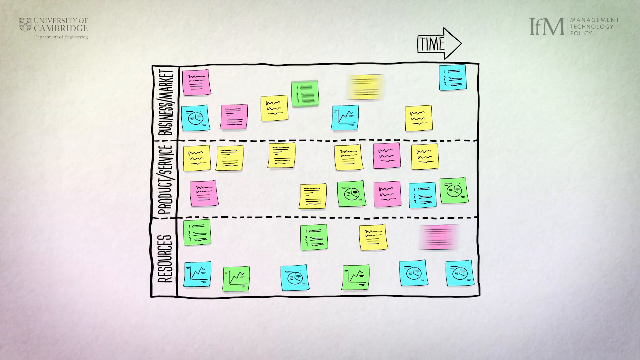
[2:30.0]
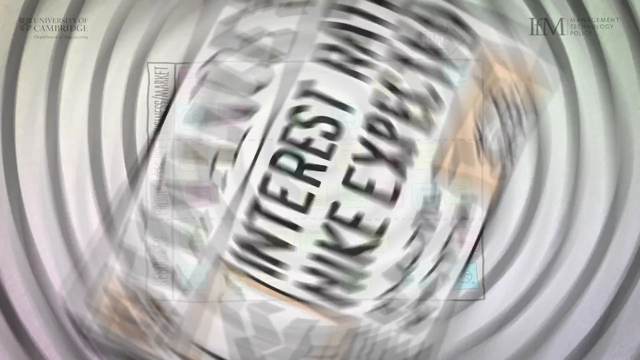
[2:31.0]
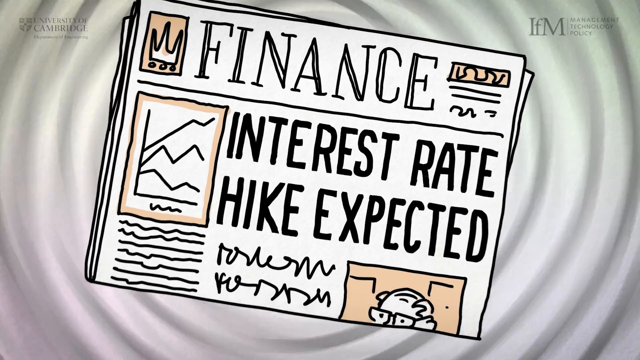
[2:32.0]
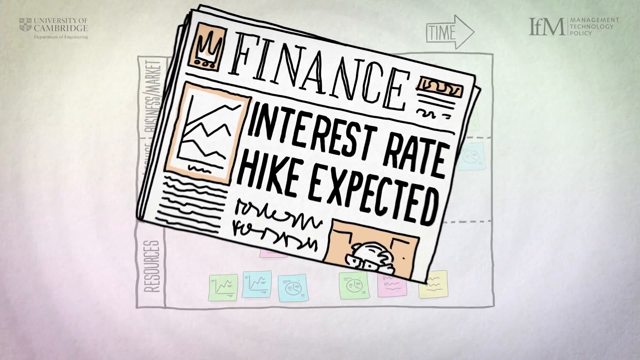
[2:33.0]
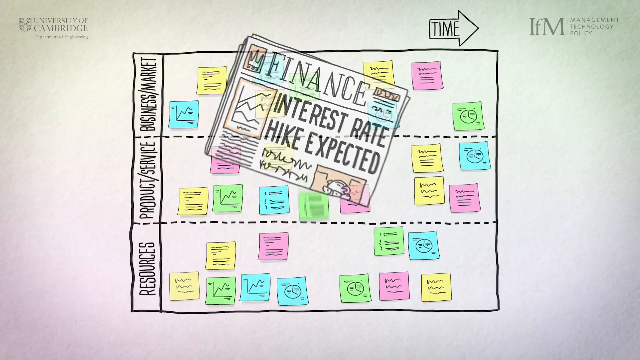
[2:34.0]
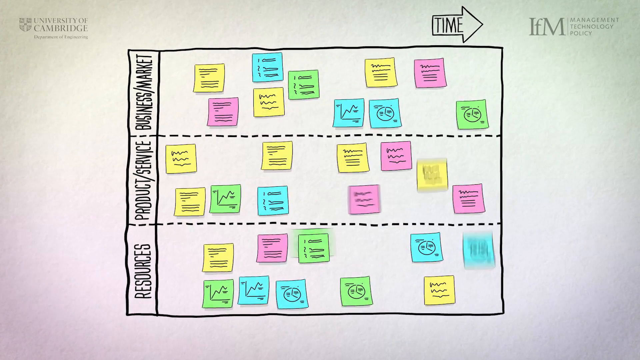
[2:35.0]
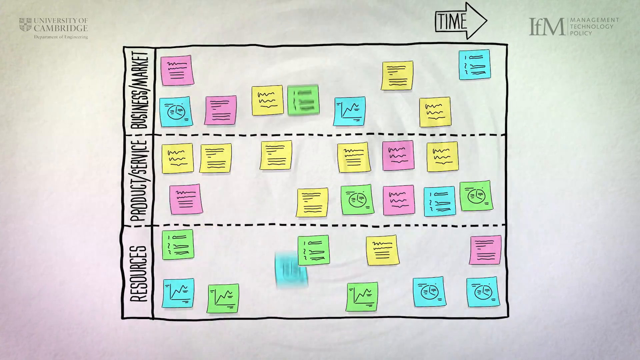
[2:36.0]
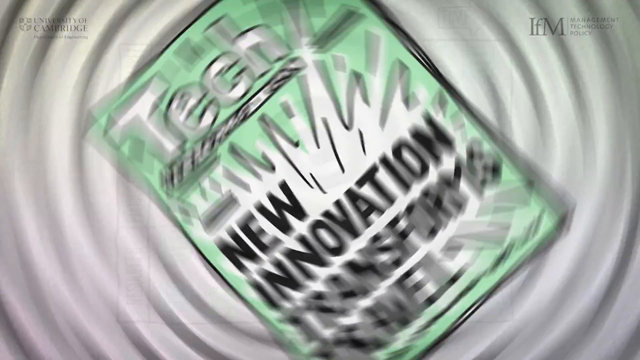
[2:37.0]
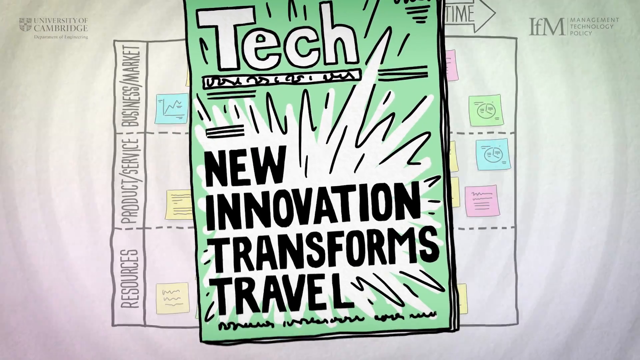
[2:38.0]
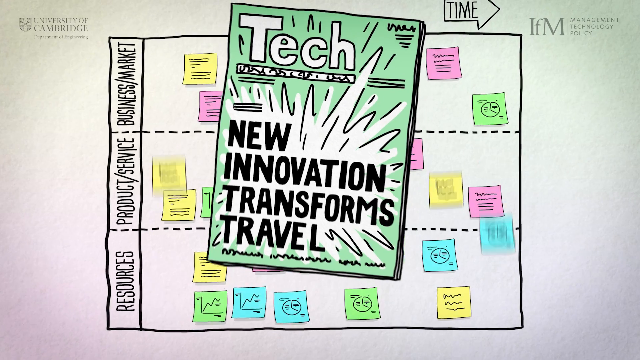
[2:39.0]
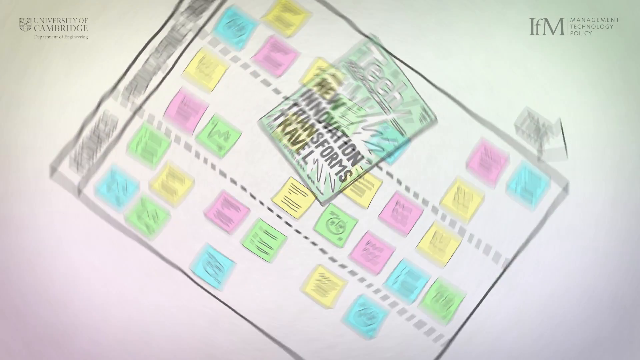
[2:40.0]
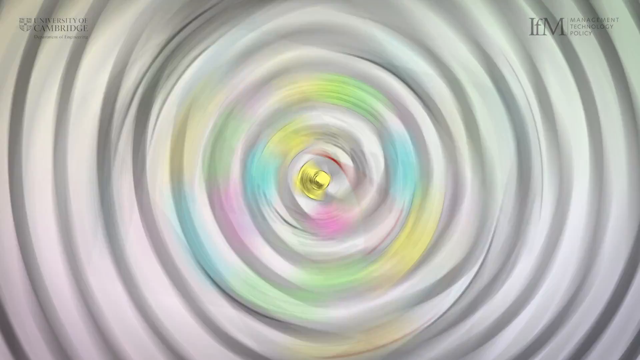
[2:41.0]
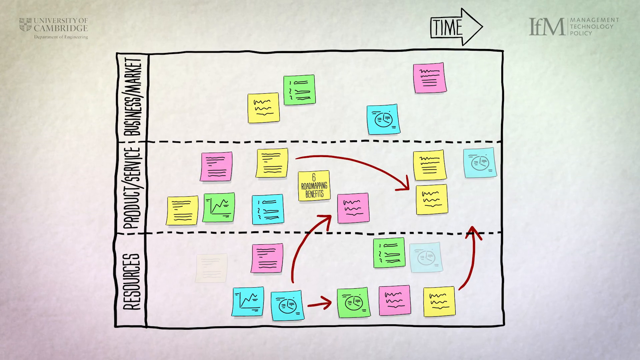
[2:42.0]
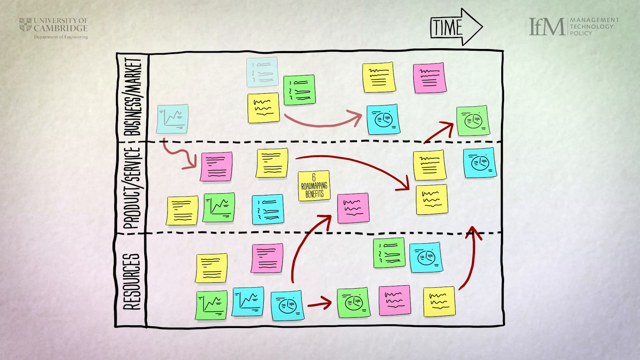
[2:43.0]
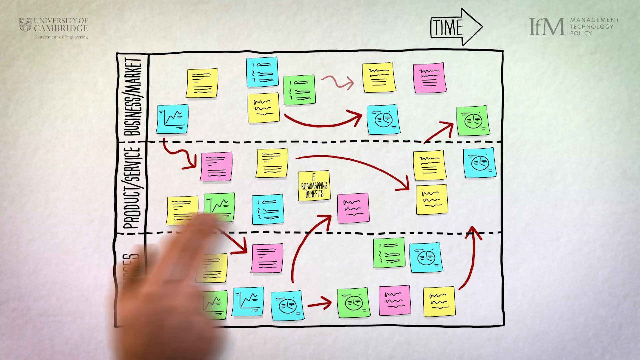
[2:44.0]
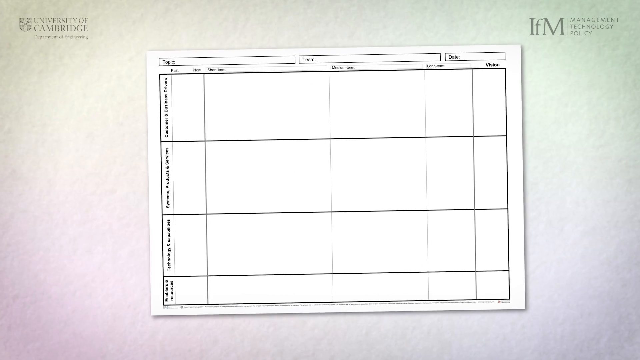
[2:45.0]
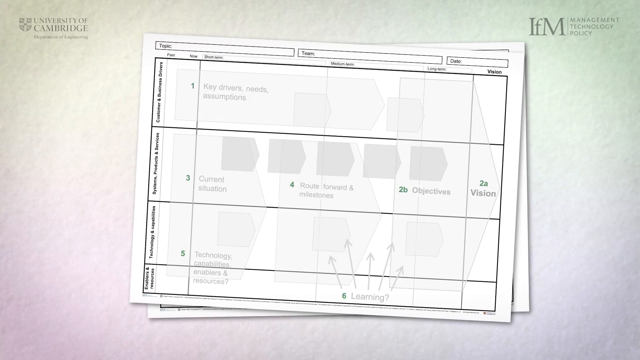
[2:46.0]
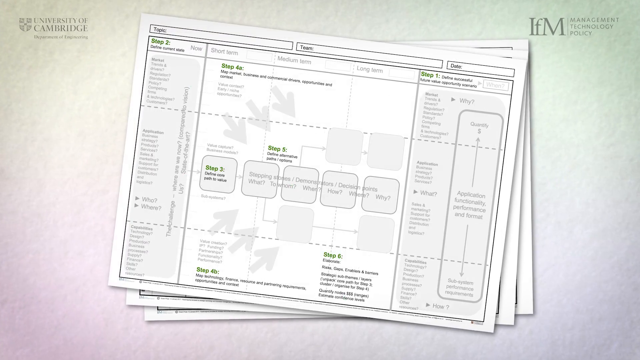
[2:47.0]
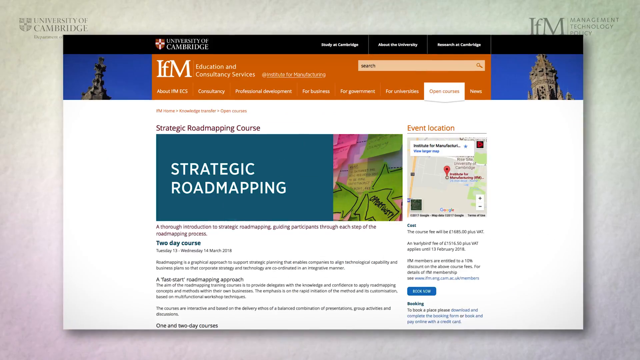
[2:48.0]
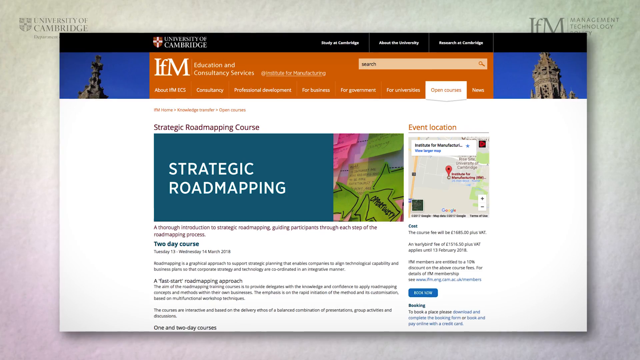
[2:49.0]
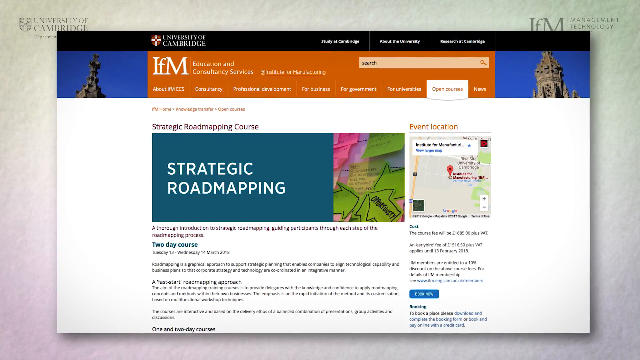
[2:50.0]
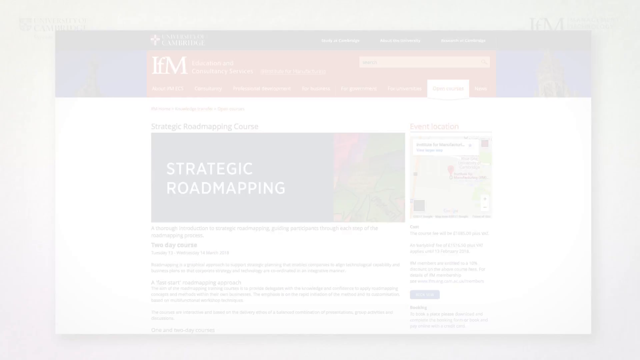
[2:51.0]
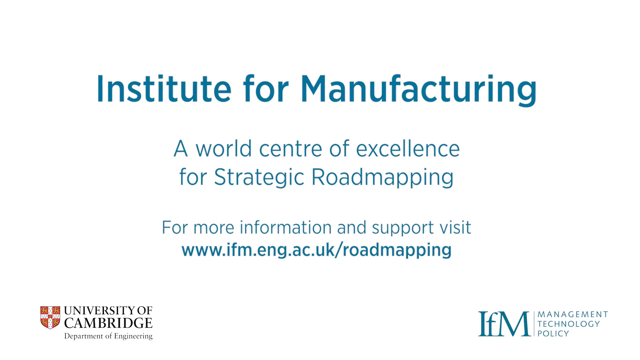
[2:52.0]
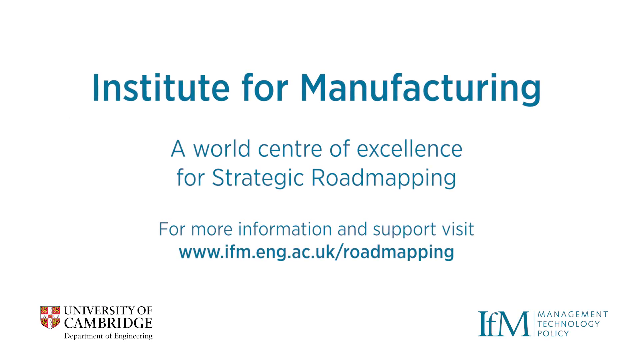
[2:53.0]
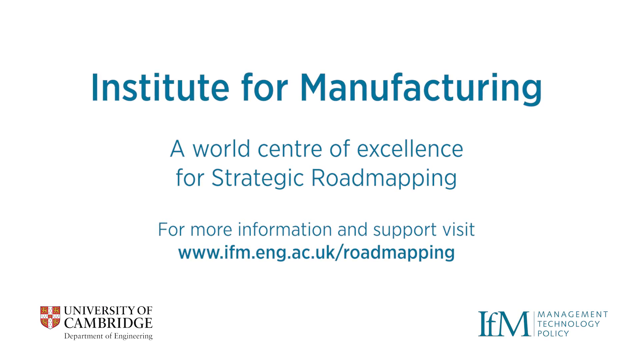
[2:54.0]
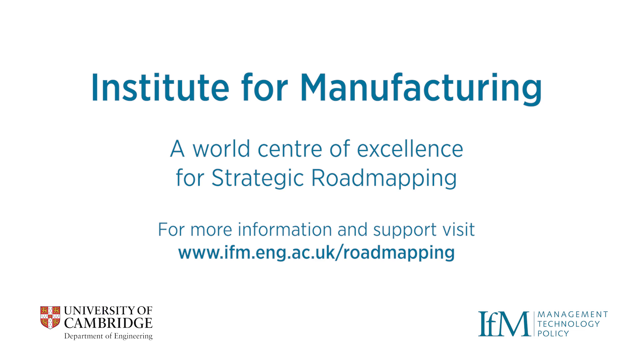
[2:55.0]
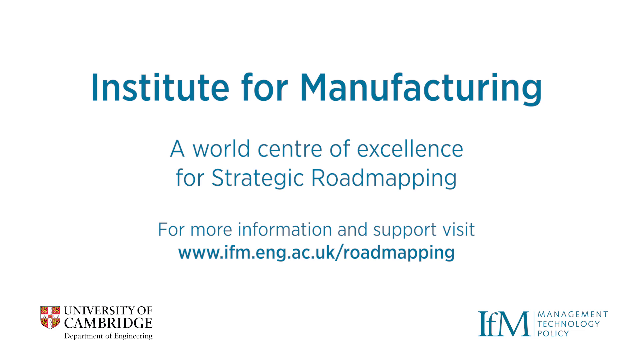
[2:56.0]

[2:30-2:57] On a white background, an IFM logo is in the top right-hand corner and a logo in the top left-hand corner says "University of Cambridge." The business board of Post-it notes is shown again, highlighted this time, with an arrow above the board that says "time" in the middle. The Post-it notes begin to move around on their own. A cartoon newspaper then appears, titled "finance," with a subtitle ending "rate hike expected." The scene returns to the collage, with the notes moving all around, and then a magazine appears titled "tech," with a subtitle that says "new and innovative transforms travel." The collage appears again, and other images appear on the screen, such as a calendar and a web page. The video ends with "Institute for Manufacturing" and "for more information and support visit www.ifm.eng.ac.uk\road mapping."